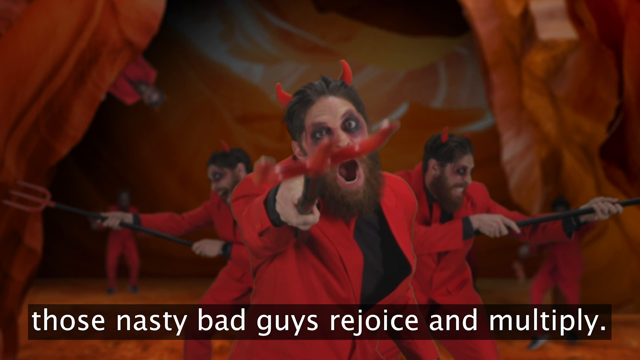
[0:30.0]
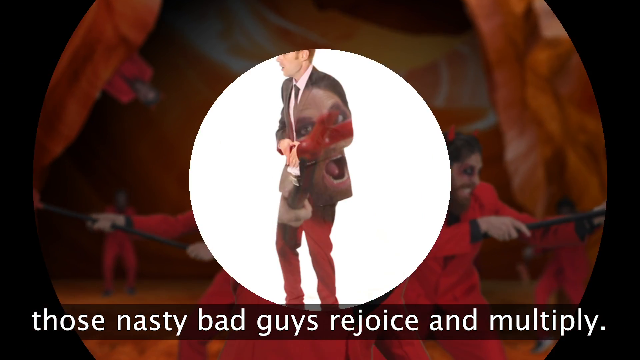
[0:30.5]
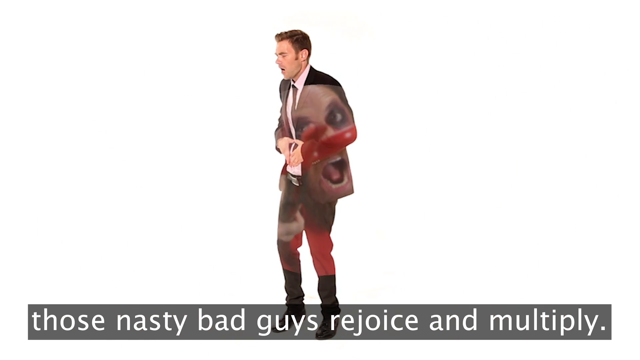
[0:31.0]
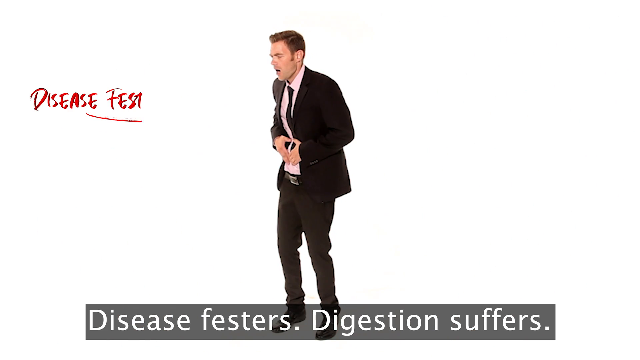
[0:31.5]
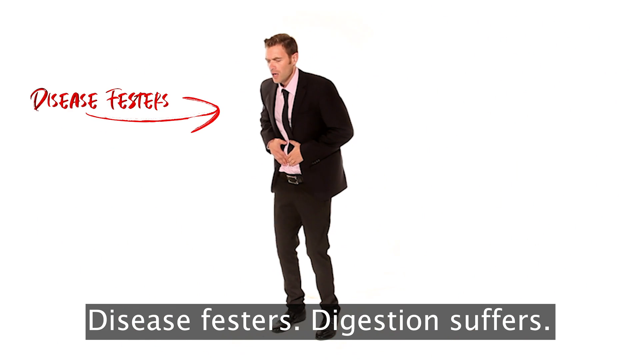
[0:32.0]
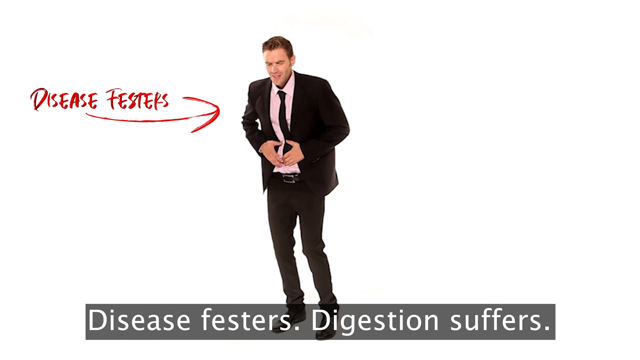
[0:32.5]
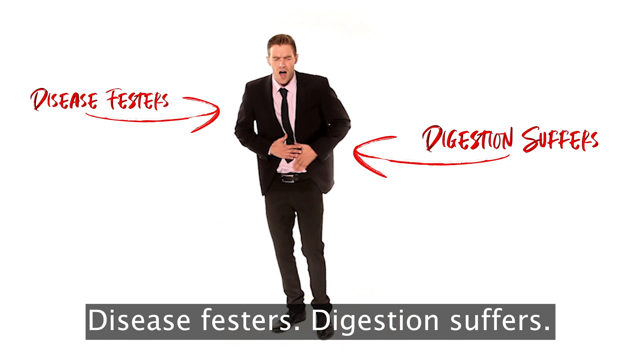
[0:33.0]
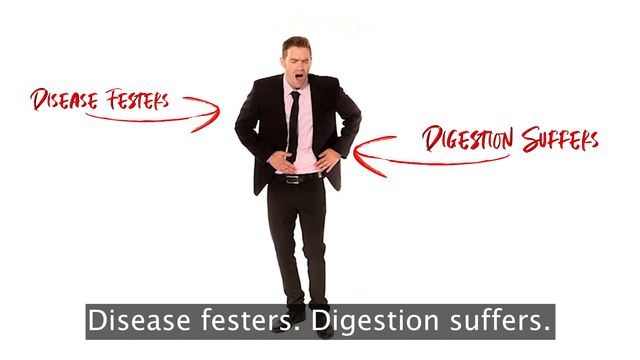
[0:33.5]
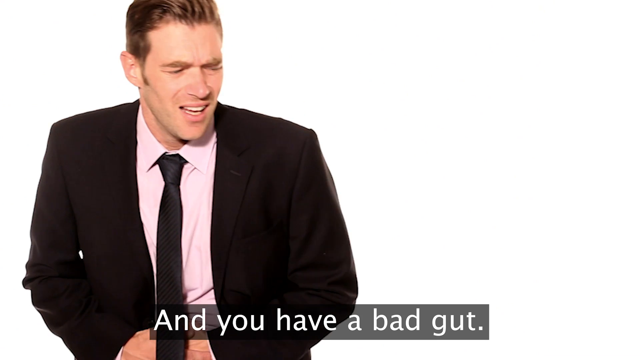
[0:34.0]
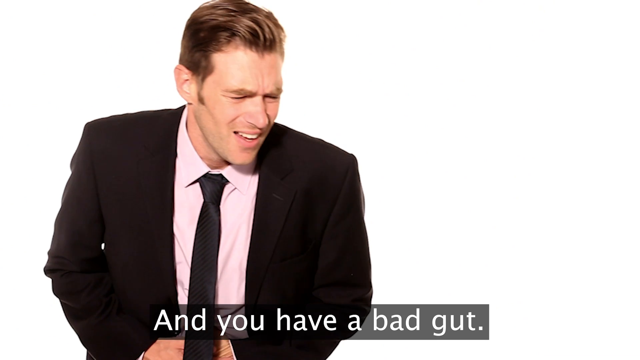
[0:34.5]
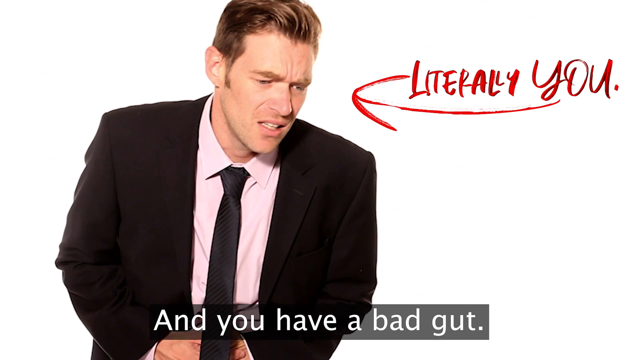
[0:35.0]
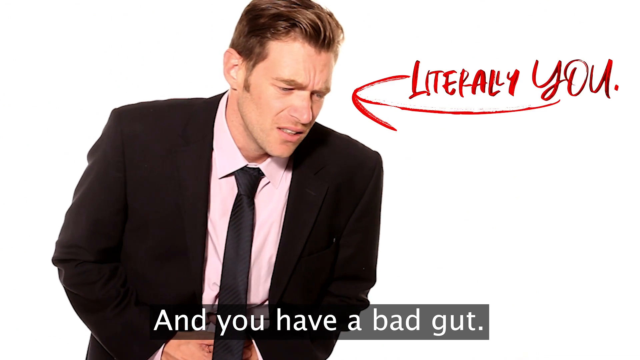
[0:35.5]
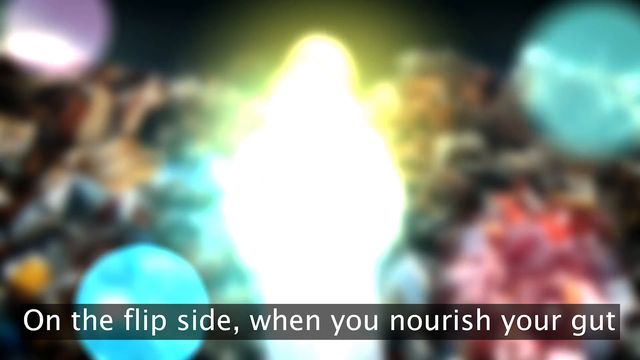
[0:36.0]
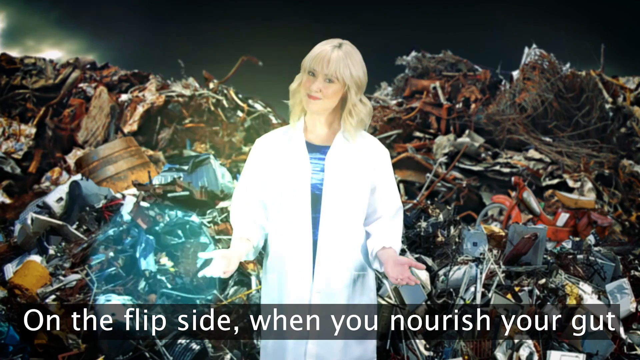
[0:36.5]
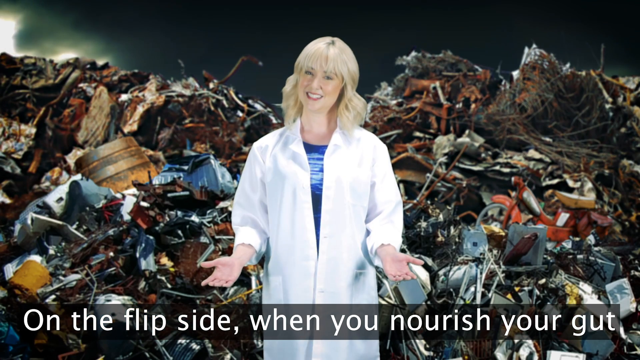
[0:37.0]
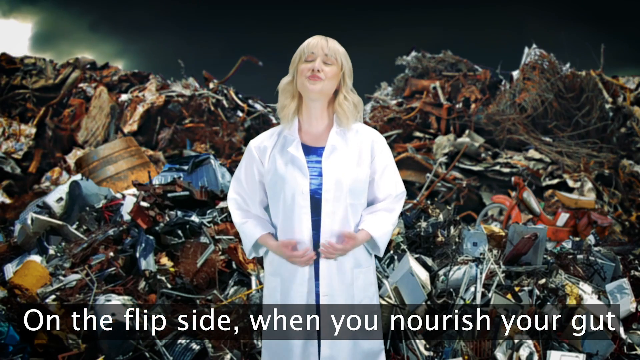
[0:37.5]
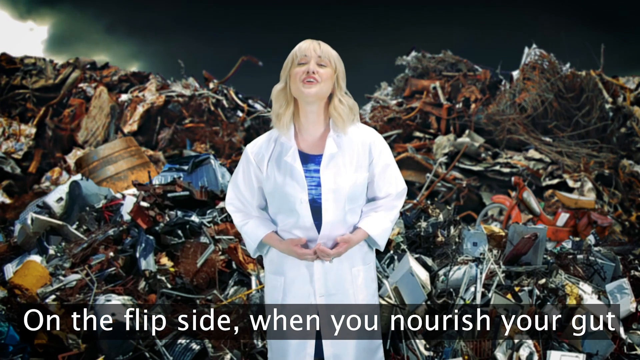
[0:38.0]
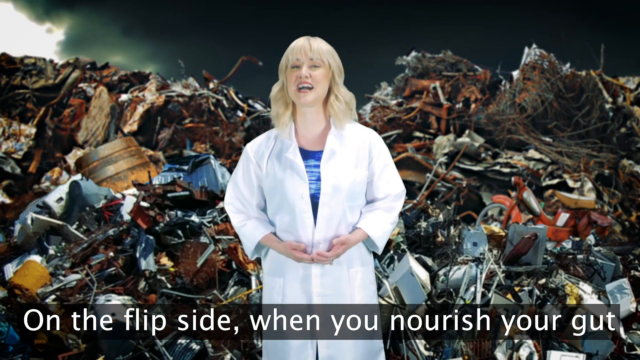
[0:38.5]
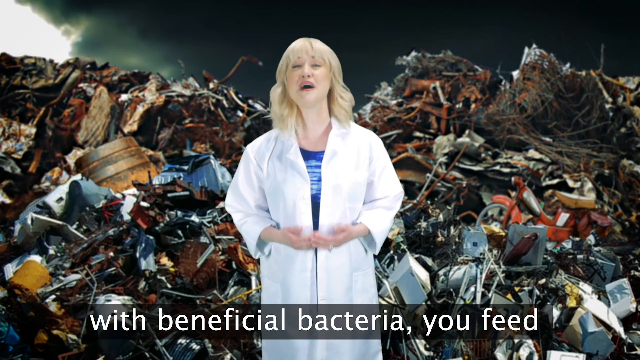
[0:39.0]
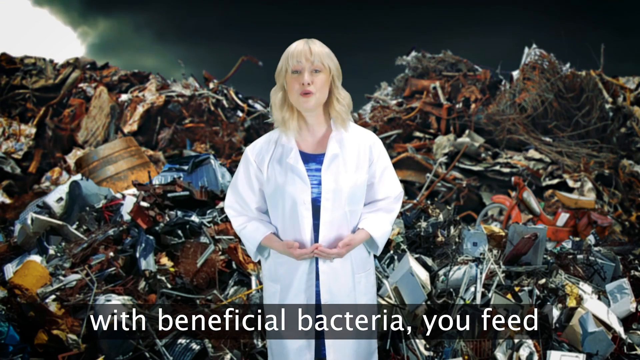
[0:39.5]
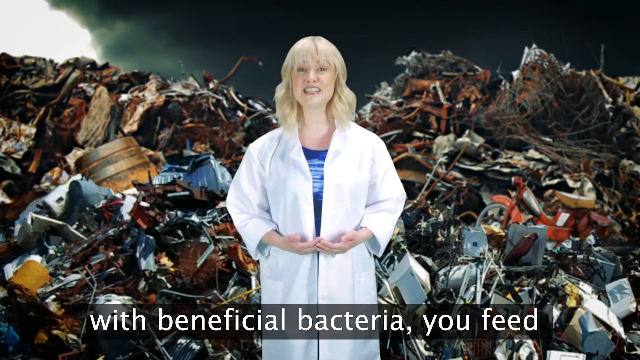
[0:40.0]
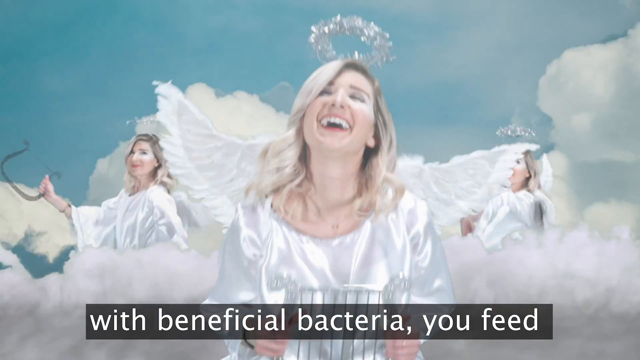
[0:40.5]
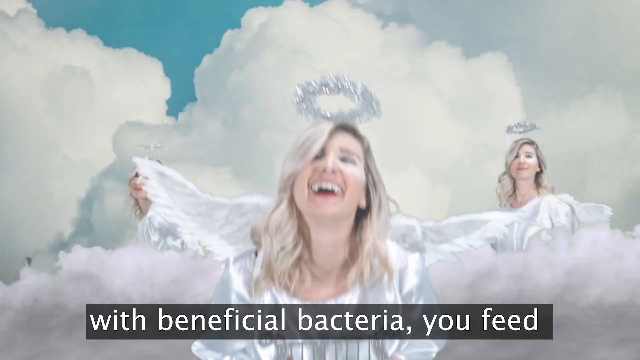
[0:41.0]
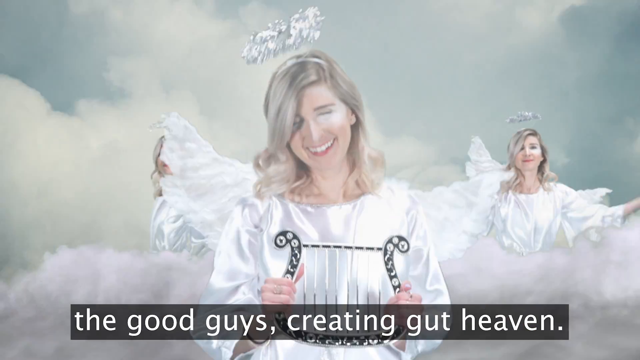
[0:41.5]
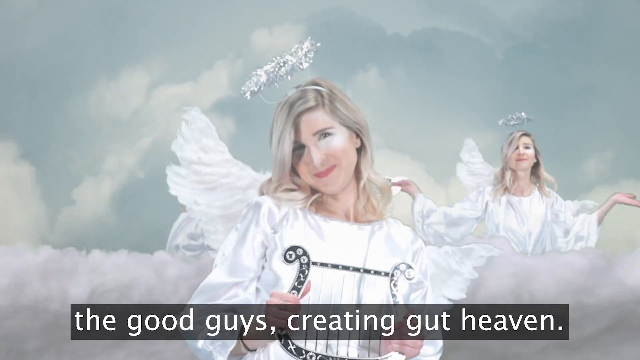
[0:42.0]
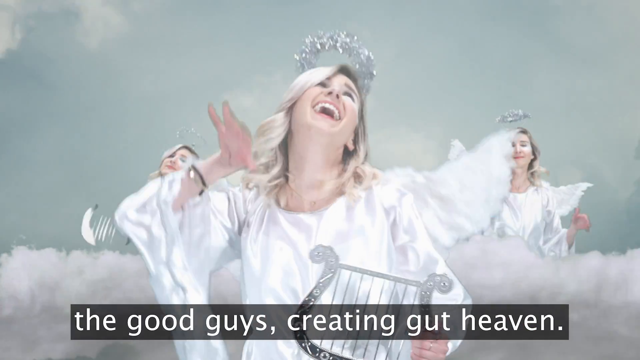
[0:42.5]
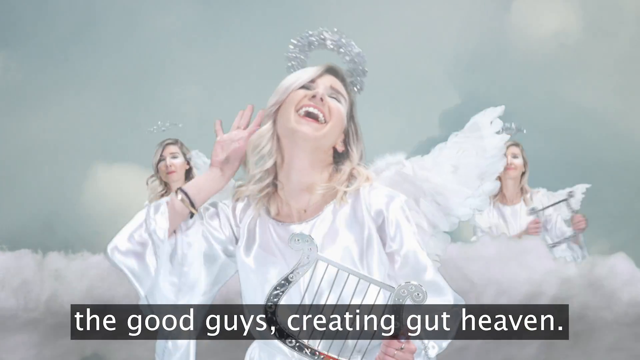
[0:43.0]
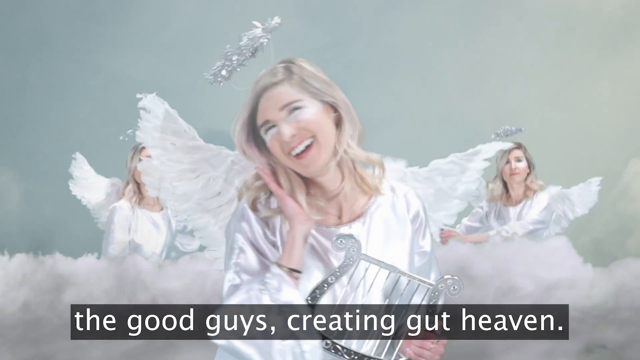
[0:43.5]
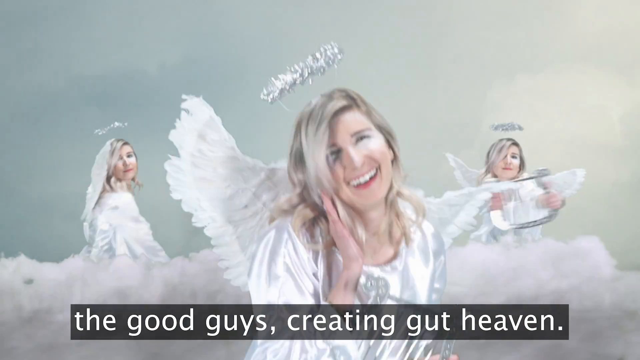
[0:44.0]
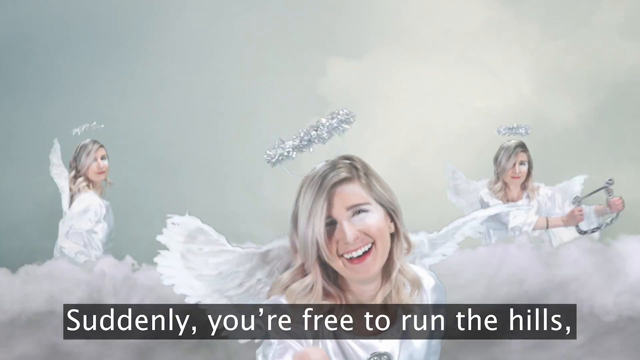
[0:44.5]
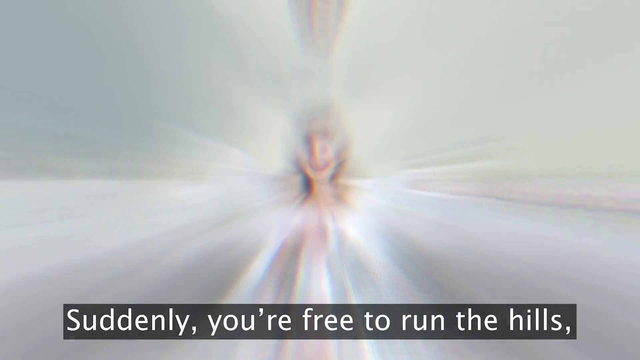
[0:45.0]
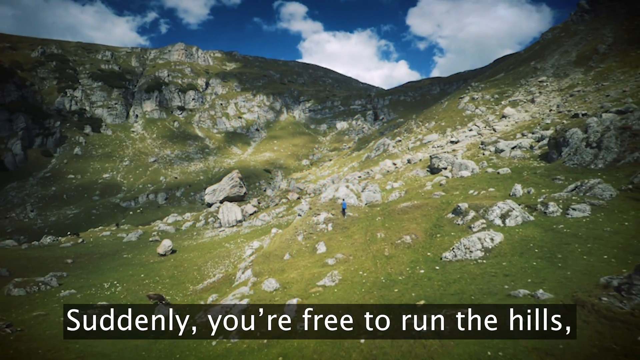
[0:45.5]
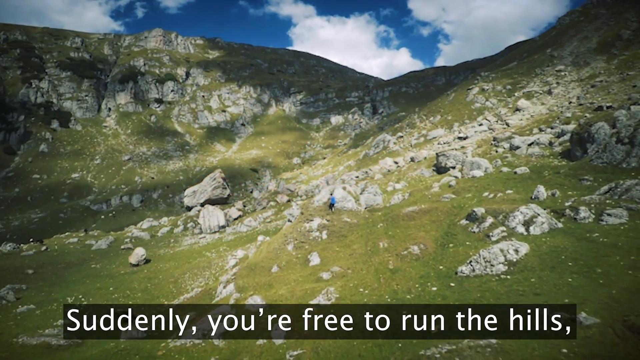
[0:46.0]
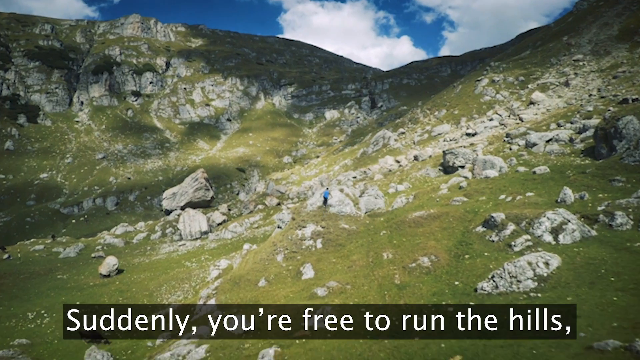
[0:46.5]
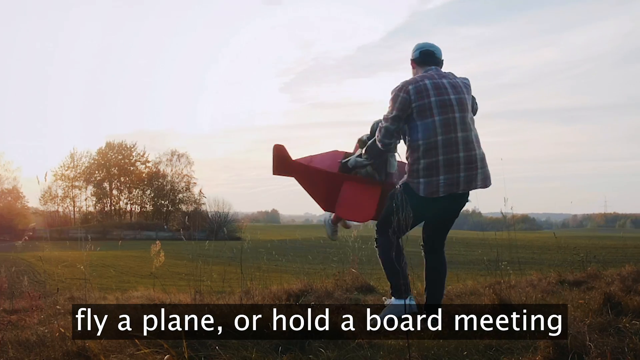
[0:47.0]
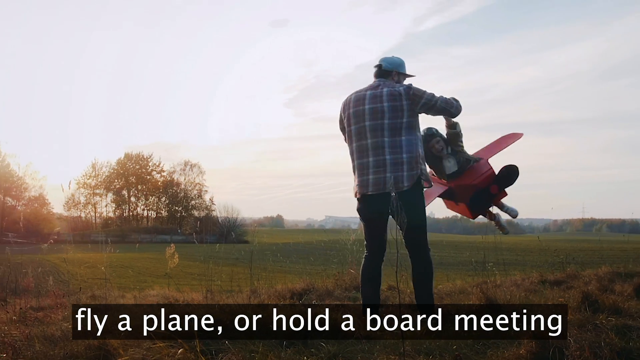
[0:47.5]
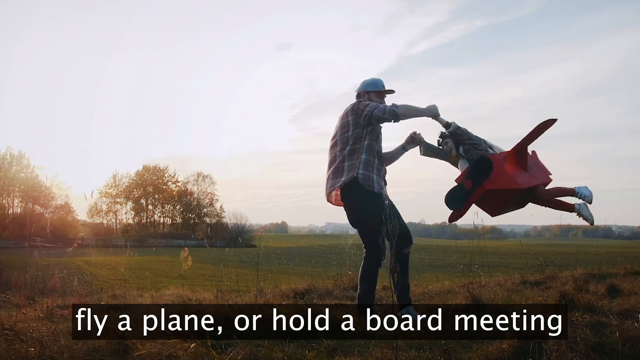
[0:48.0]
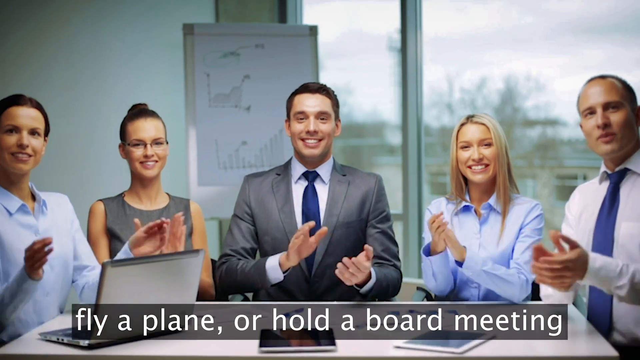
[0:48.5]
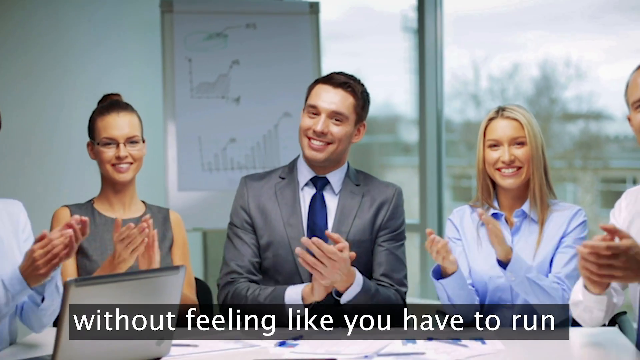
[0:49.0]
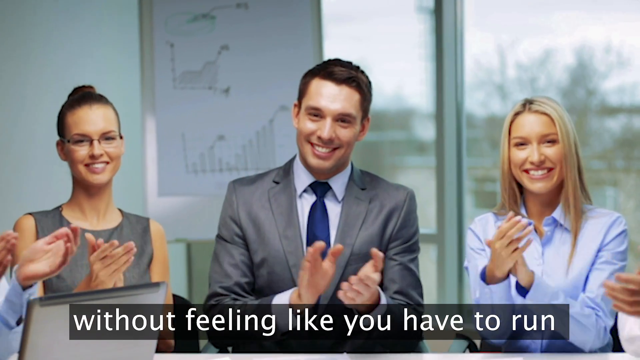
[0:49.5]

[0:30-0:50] The devil appears to transition to a man in a black suit against a white background, with red text reading "disease festers" and "digestion suffers" on the right-hand side. The man appears to be in agony, grabbing his stomach with his right hand, his face looking pained. An arrow points to his face with the text "literally you". The scene returns to the blonde woman in a blue shirt and white lab coat standing in a garbage dump, with text at the bottom reading "with beneficial bacteria you feed the good guys creating gut heaven". Next, an angel with blonde hair and a halo stands up in the clouds holding a harp, waving her right hand above her head and laughing. The video then shows a mountain range with rocks and a man in a blue outfit running.